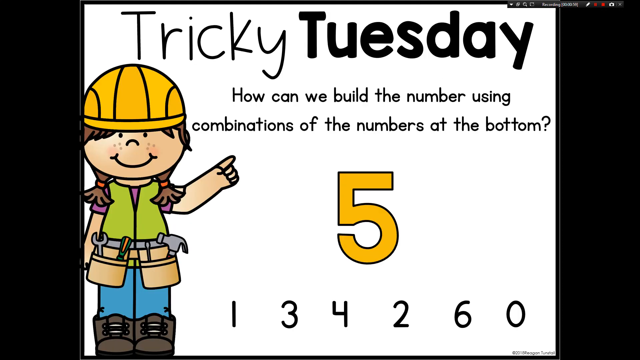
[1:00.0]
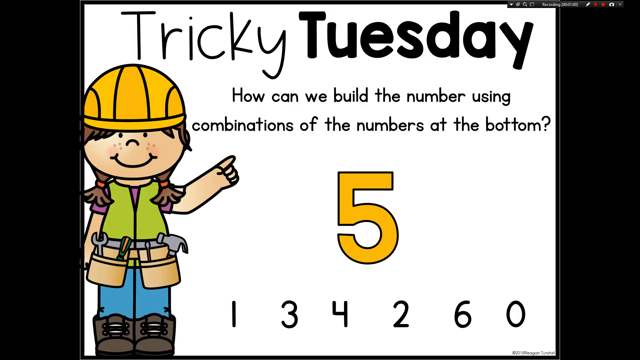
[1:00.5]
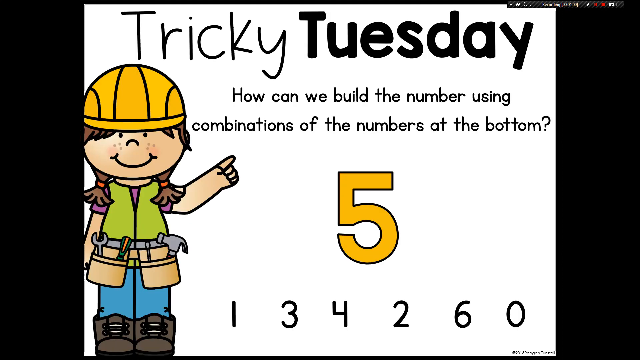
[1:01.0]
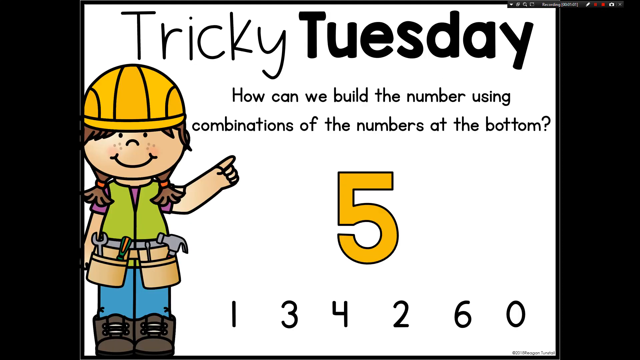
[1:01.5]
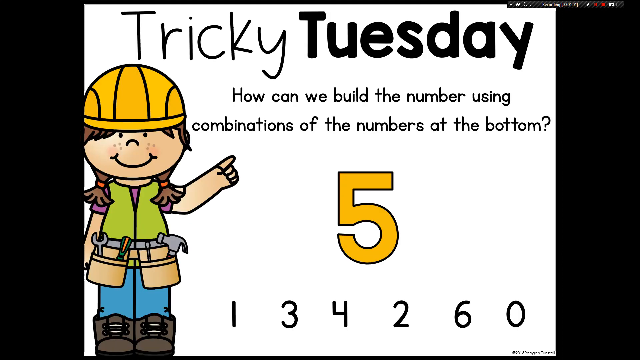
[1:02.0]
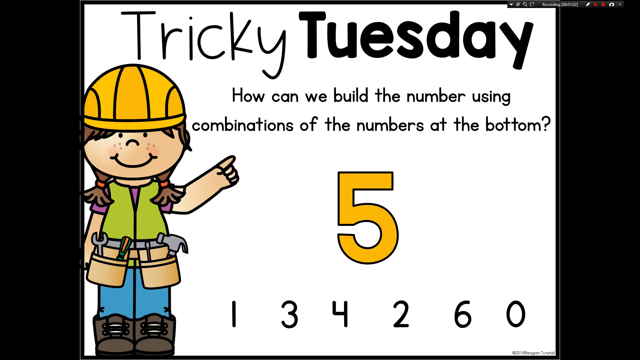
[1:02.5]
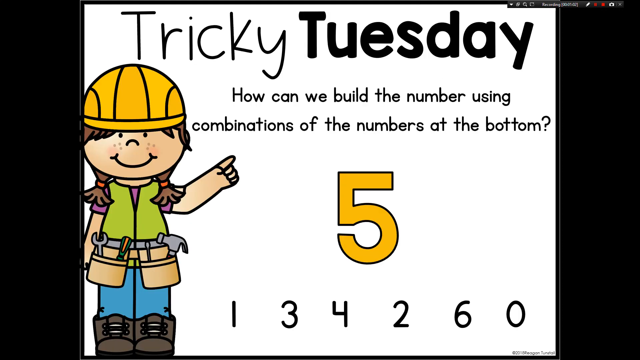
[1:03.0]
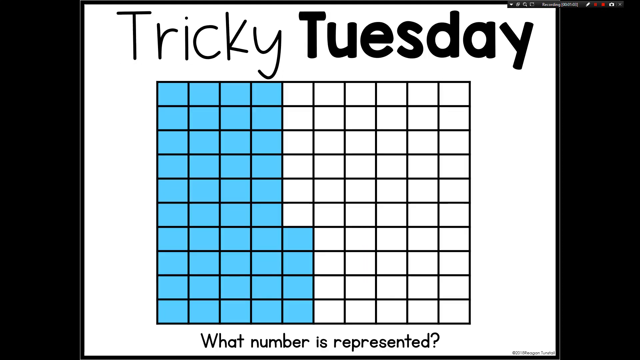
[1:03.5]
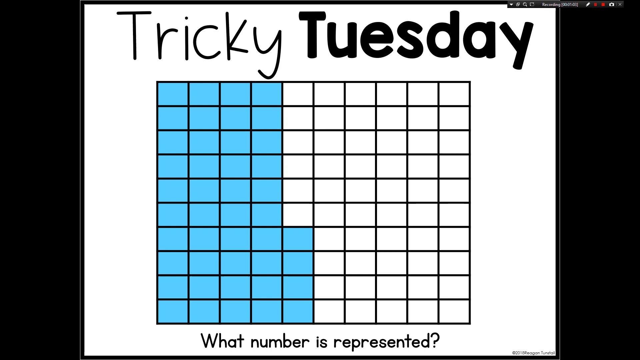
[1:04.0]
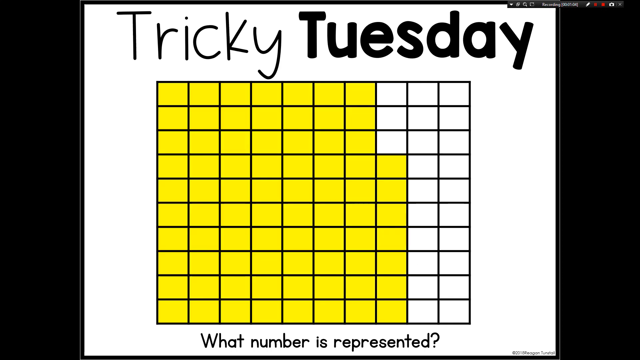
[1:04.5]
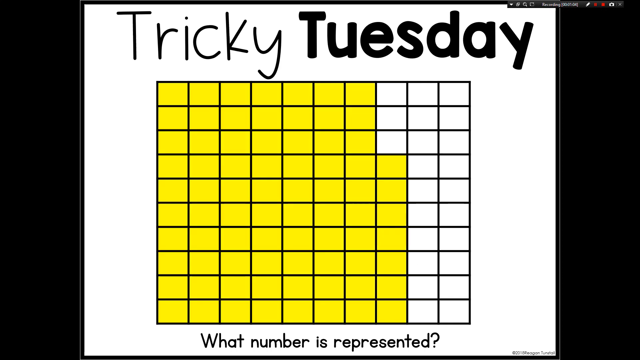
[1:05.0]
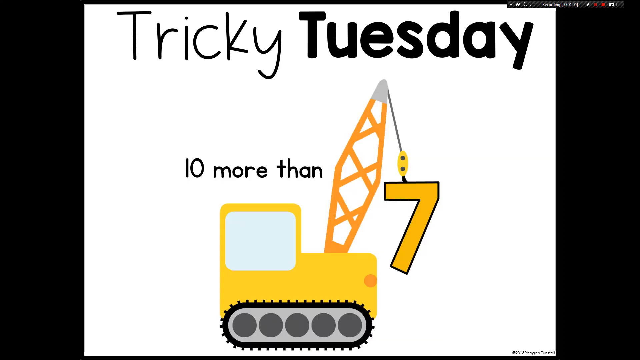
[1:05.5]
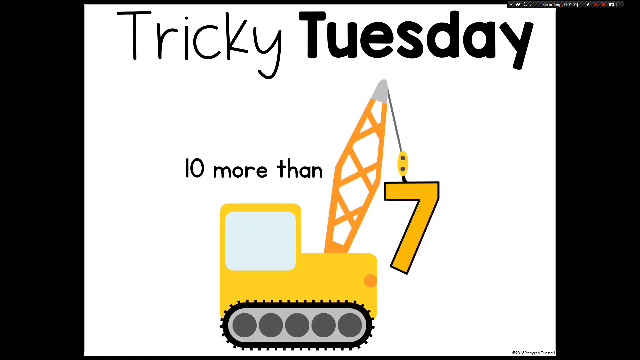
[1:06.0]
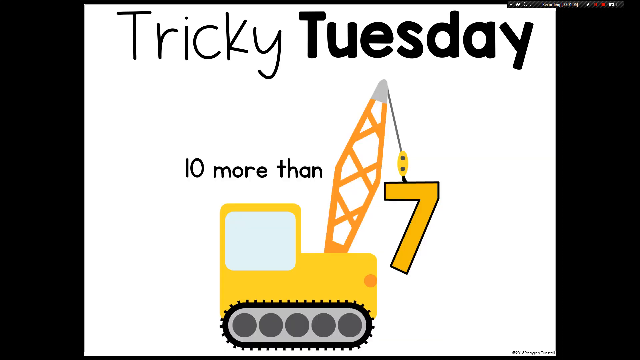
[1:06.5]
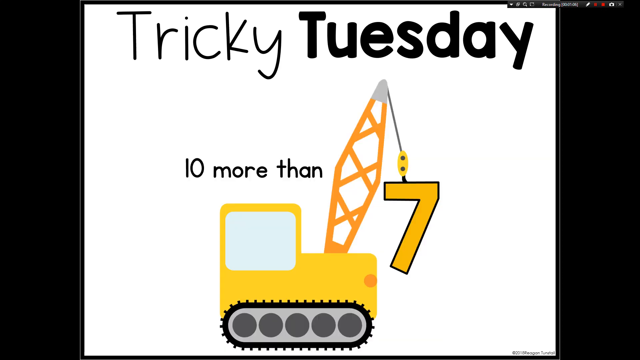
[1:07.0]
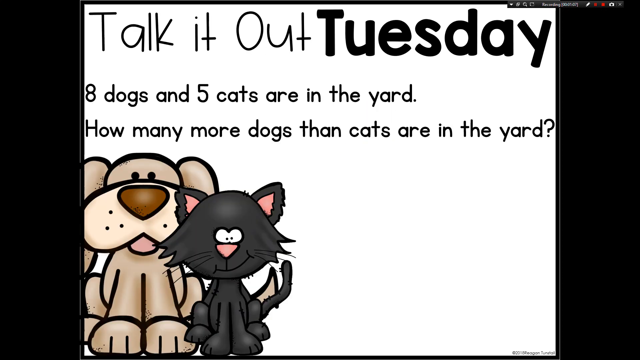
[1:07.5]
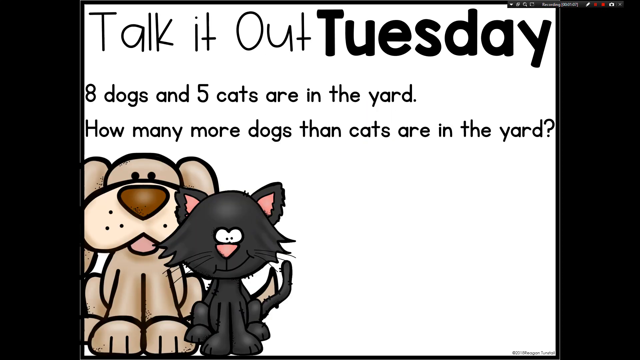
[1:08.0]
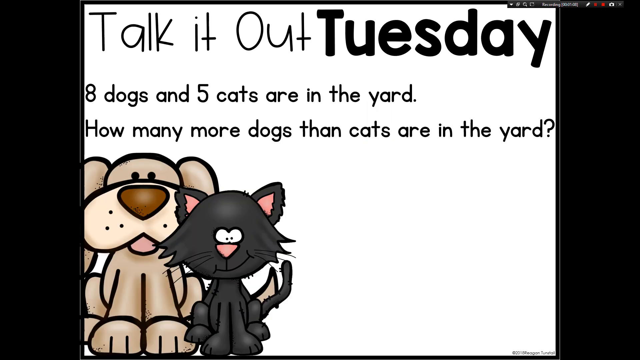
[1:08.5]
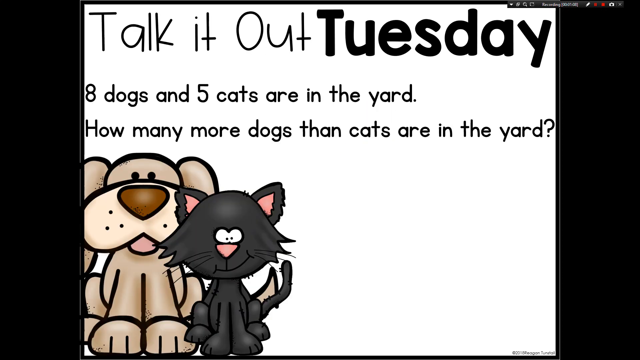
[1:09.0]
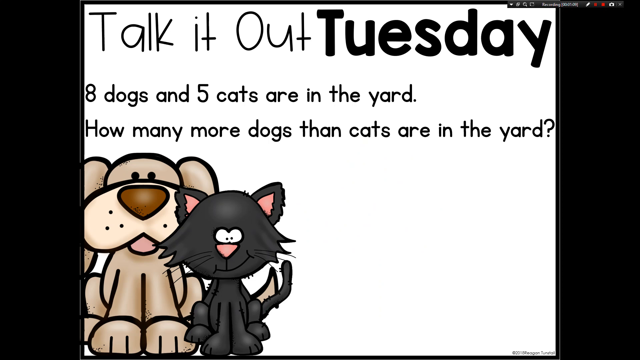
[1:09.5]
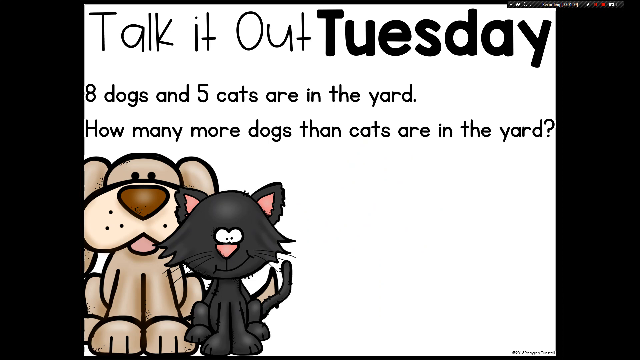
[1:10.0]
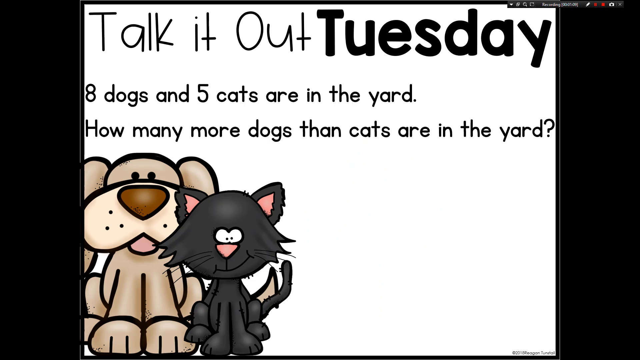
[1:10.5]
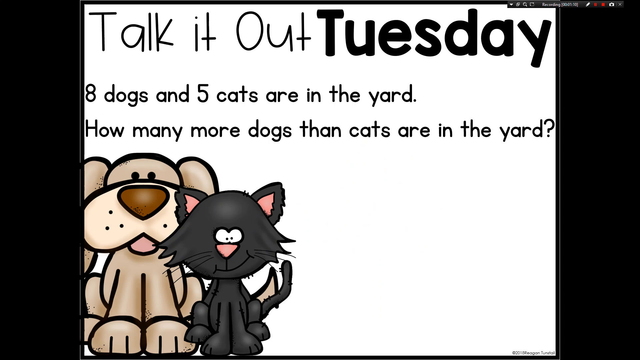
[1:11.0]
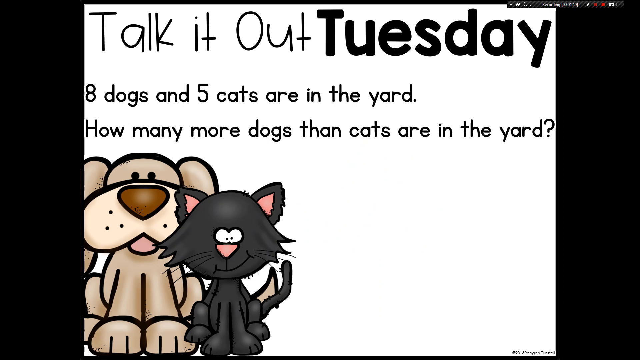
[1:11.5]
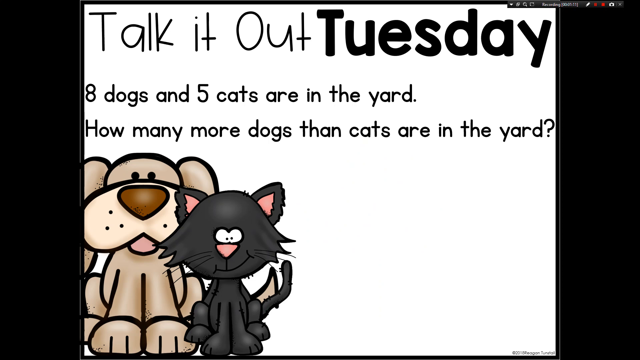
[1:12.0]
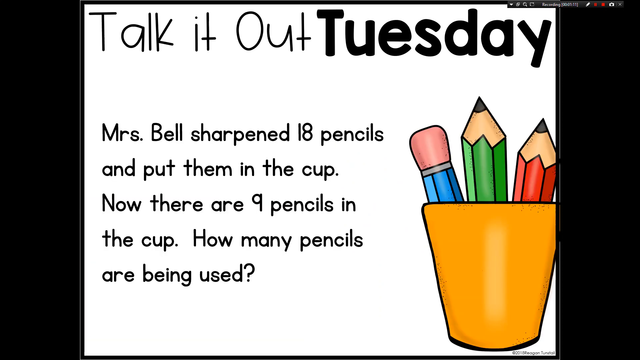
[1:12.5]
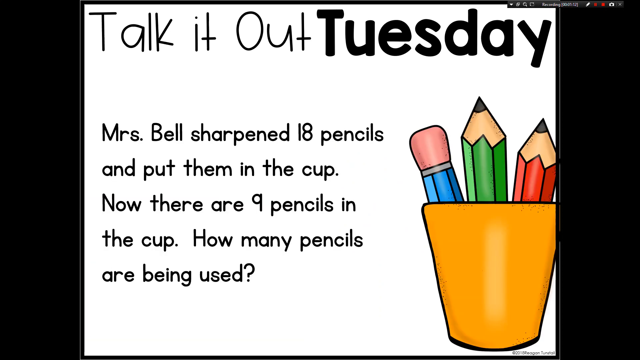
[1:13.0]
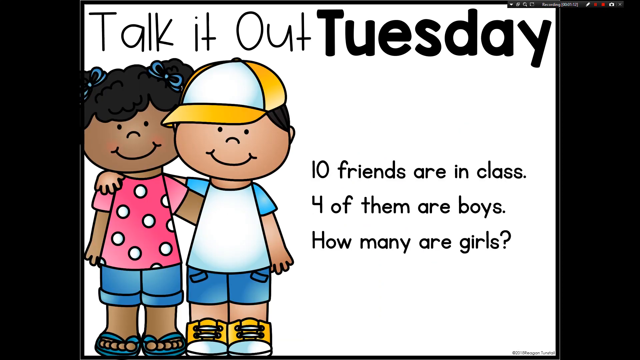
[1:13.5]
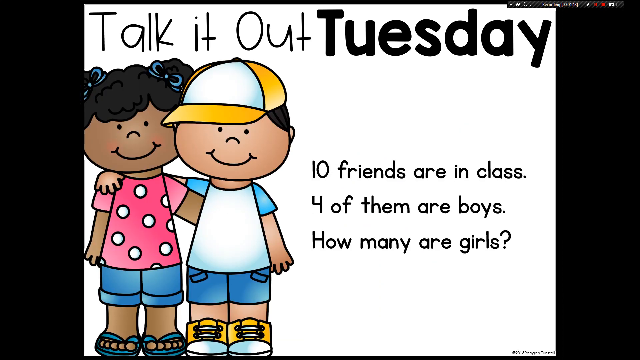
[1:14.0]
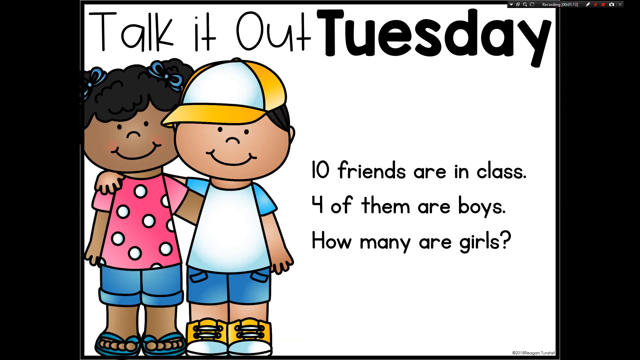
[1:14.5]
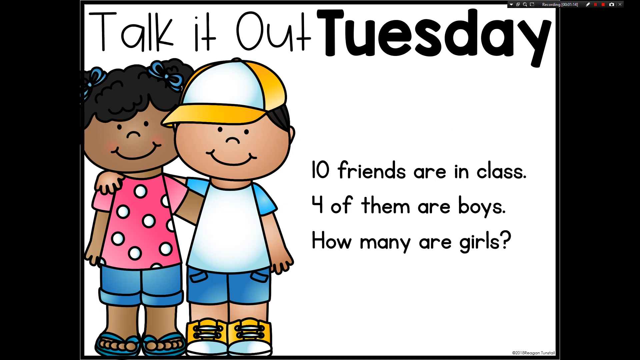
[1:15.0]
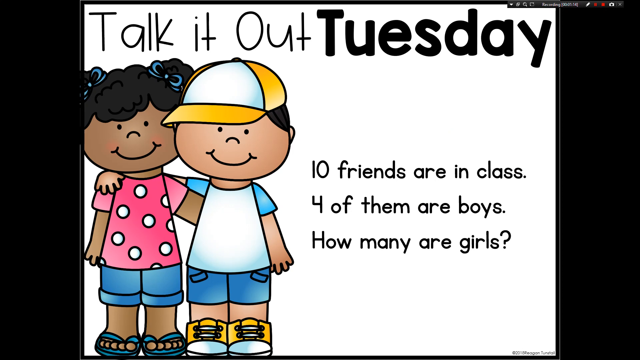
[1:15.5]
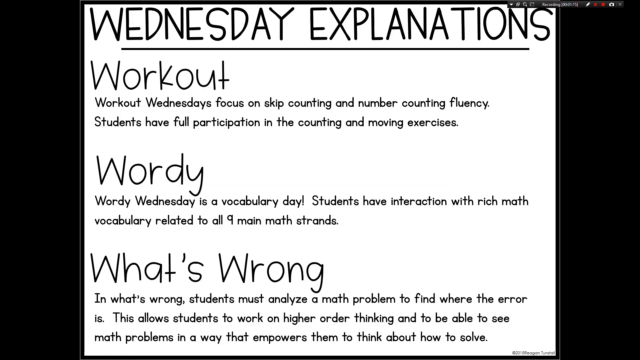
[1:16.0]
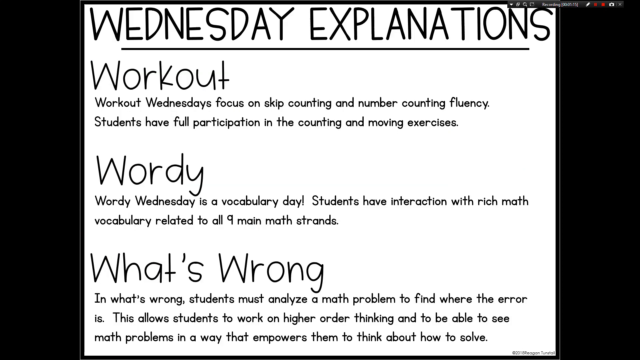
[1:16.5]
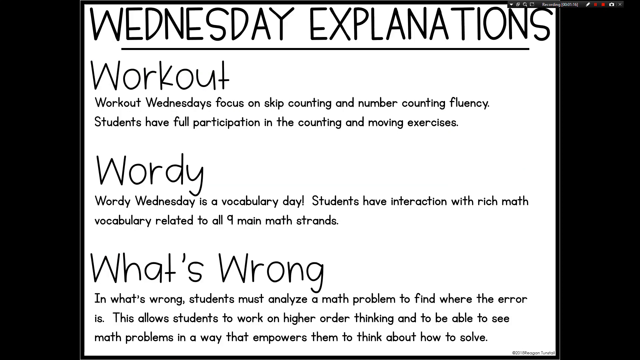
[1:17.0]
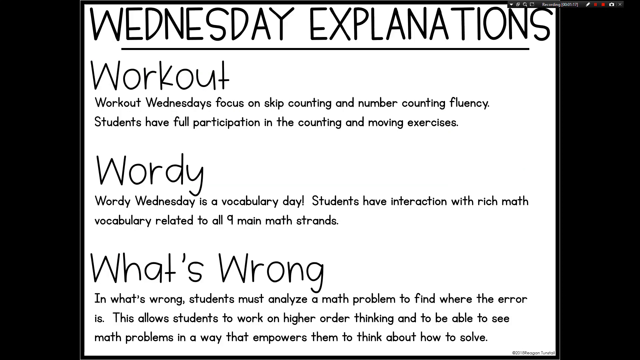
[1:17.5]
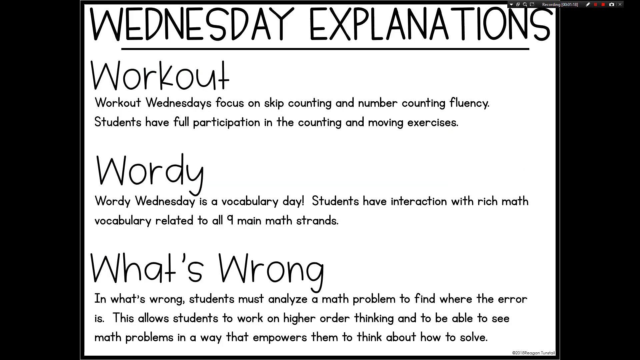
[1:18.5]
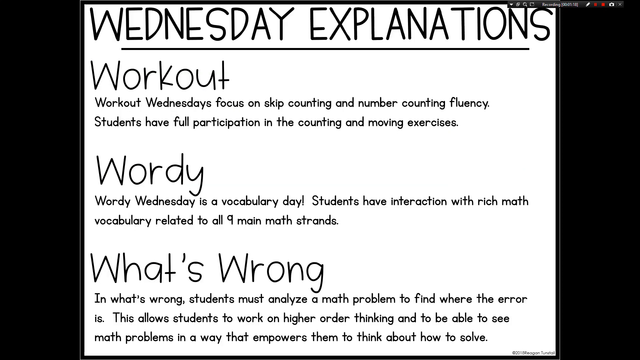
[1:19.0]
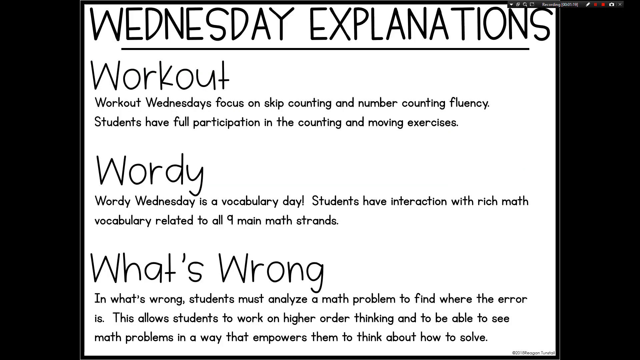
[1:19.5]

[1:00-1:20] The screen says "Tricky Tuesday" and "How can we build a number using combinations of the number at the bottom?" with the number 5, then the numbers 1, 3, 4, 2, 6 and 0. A small animated girl appears. Another "Tricky Tuesday" slide has something highlighted and the numbers 10, 1 and 7. Then "Talk it out Tuesday" shows "Eight dogs and five cats are in the yard. How many more dogs..." and "10 friends are in a class, four of them are boys, how many are girls?" Next comes "Wednesday explanations": "Workout Wednesdays focus on skip counting", "Wordy Wednesday is a vocabulary day. Students have interaction with rich math vocabulary", and "What's wrong", where "Students must analyze" to find where the error is. Text also reads "How can we build the number using combinations of this numbers at the bottom?"